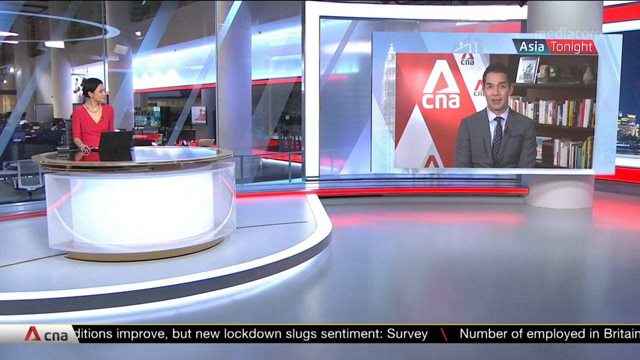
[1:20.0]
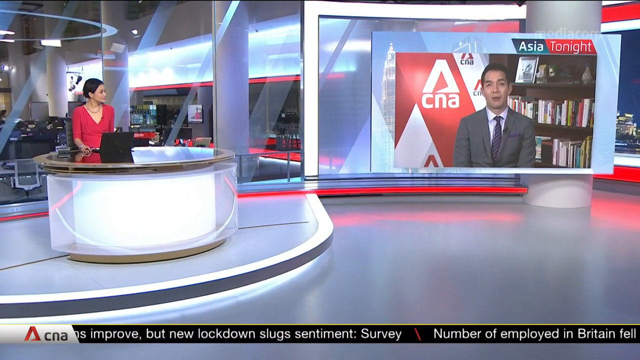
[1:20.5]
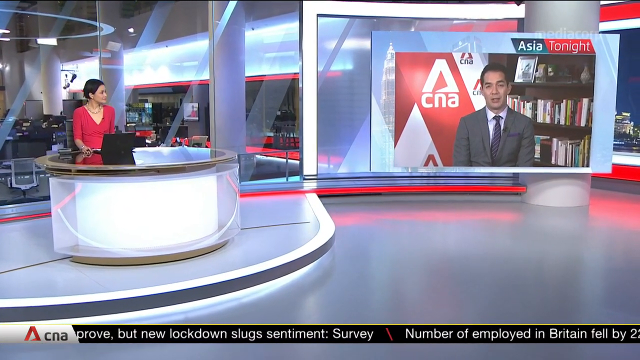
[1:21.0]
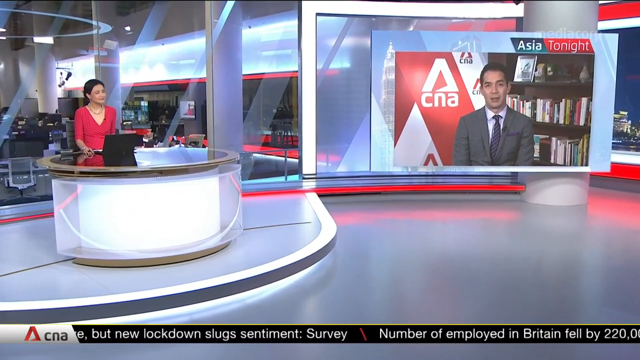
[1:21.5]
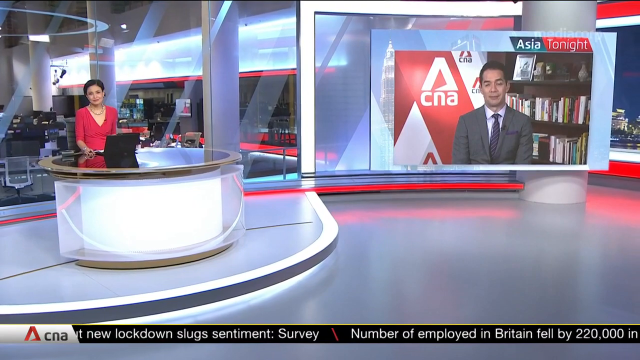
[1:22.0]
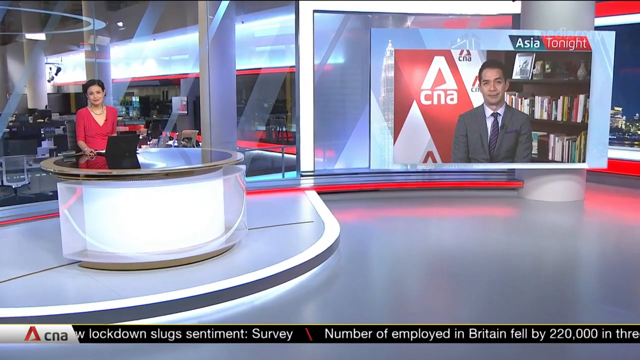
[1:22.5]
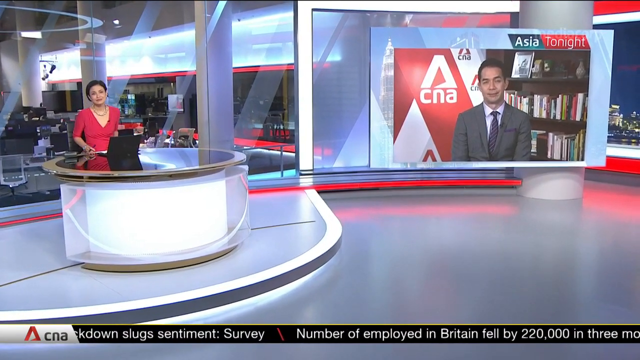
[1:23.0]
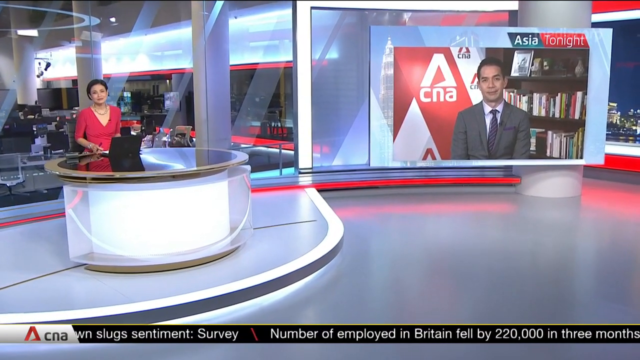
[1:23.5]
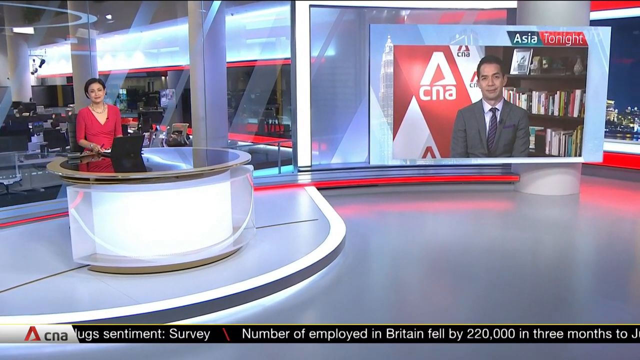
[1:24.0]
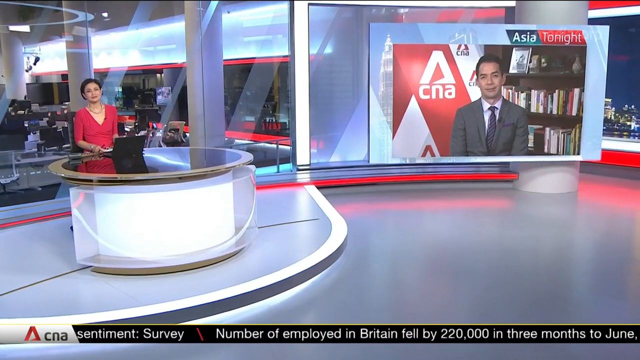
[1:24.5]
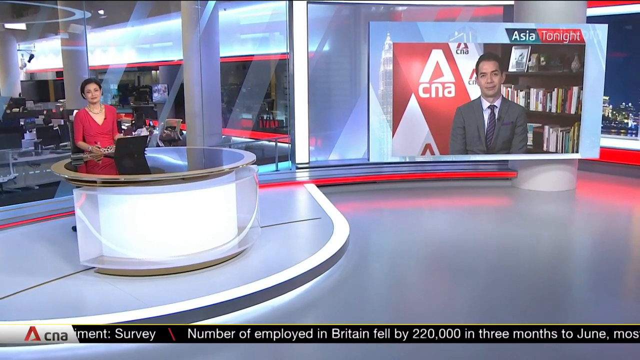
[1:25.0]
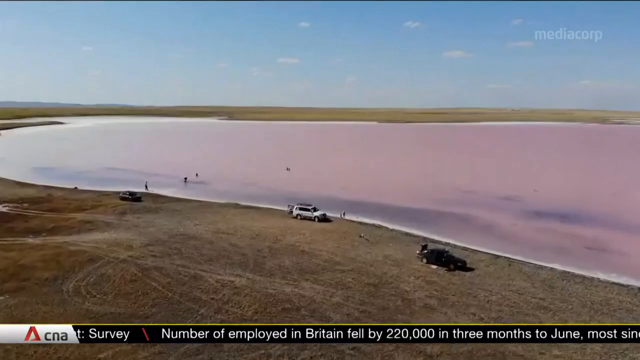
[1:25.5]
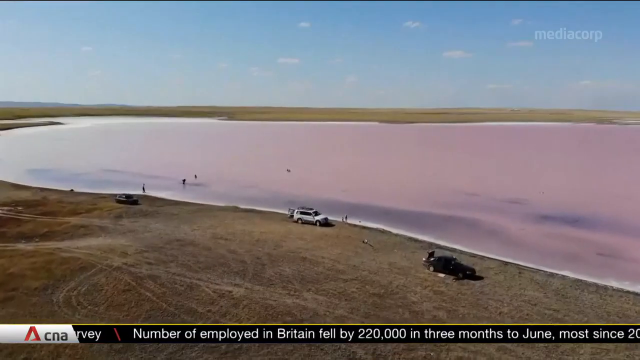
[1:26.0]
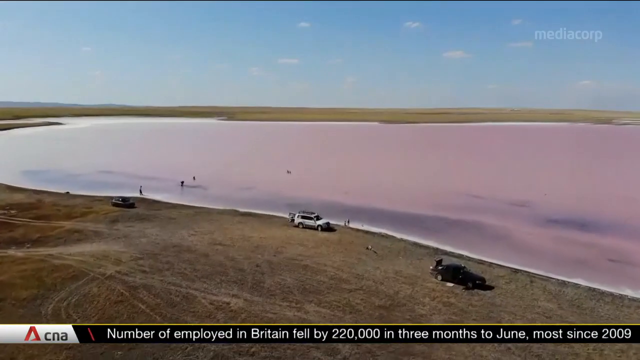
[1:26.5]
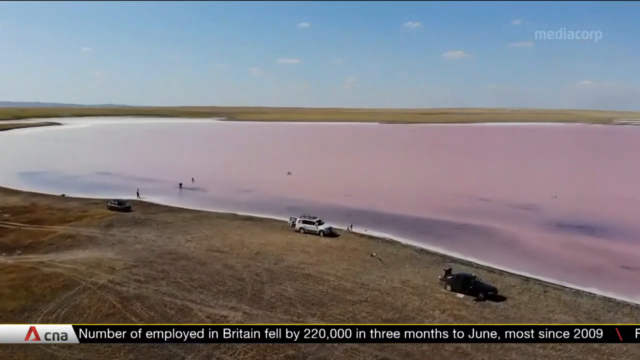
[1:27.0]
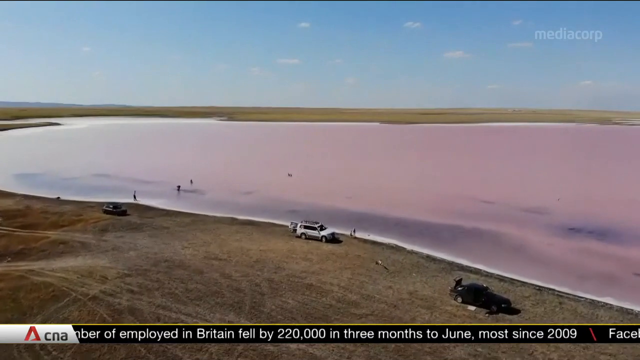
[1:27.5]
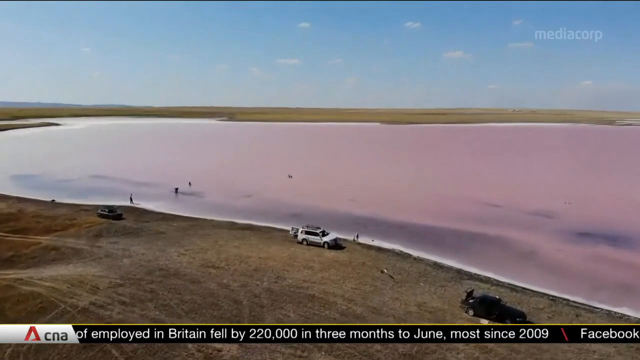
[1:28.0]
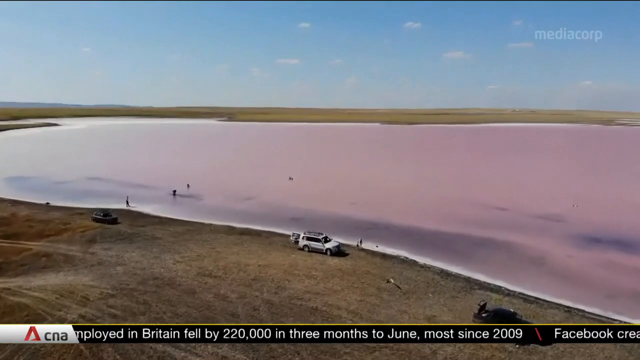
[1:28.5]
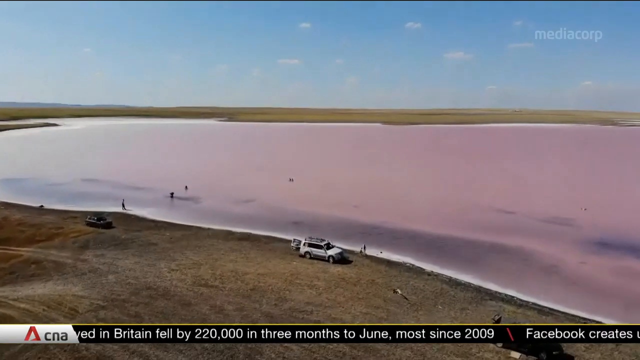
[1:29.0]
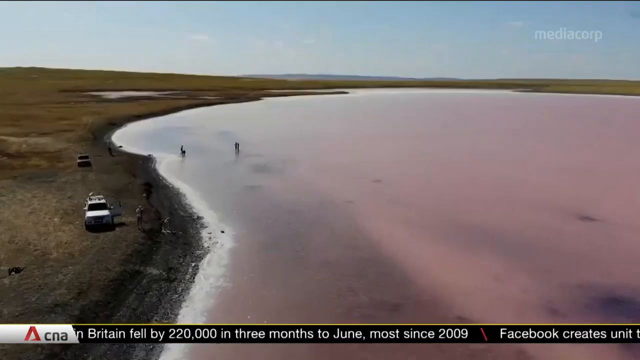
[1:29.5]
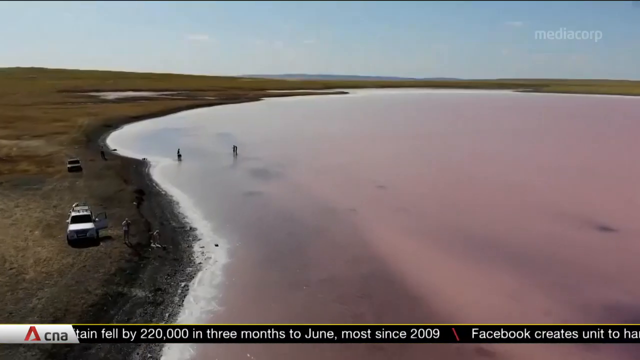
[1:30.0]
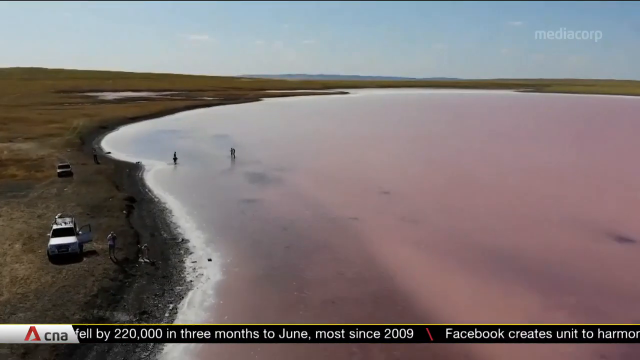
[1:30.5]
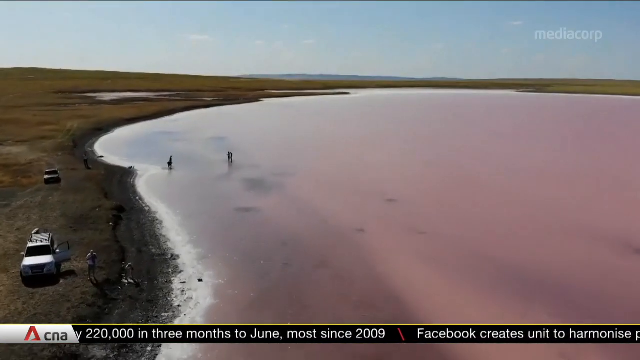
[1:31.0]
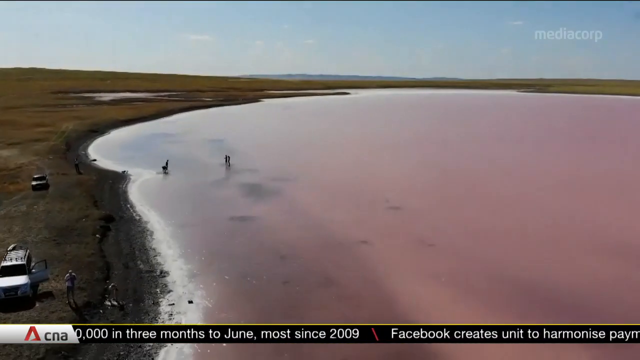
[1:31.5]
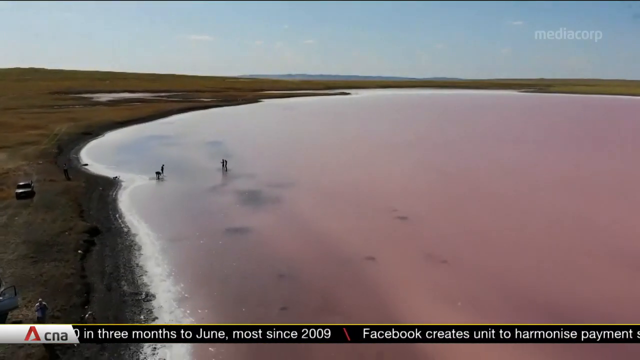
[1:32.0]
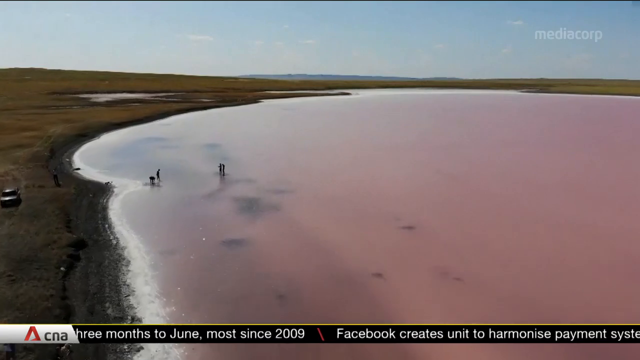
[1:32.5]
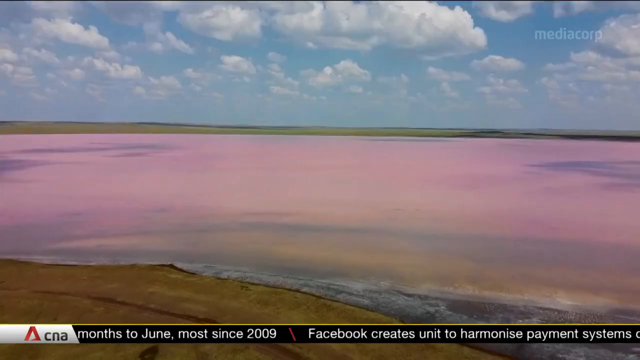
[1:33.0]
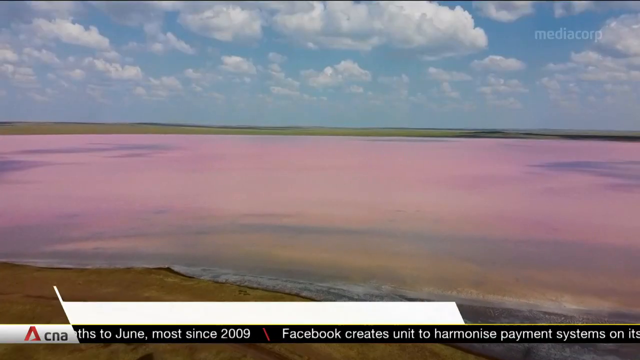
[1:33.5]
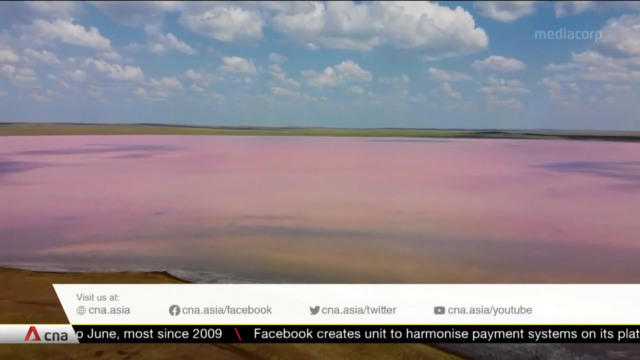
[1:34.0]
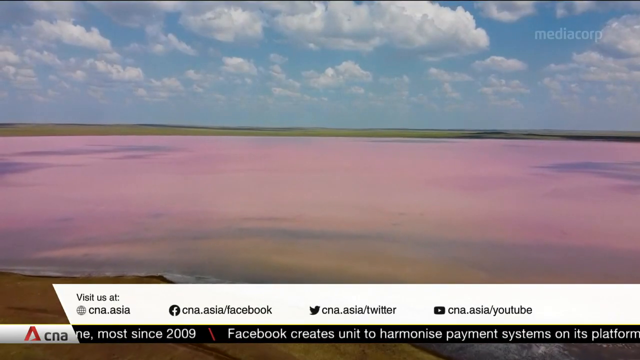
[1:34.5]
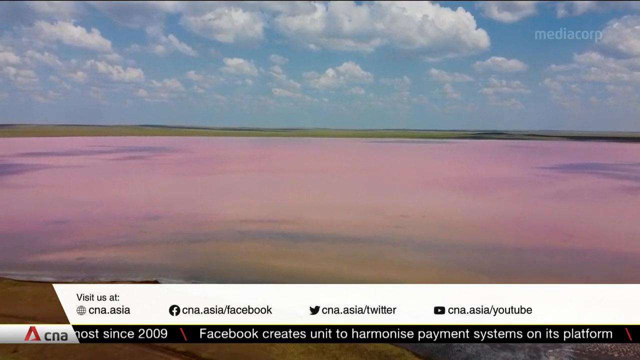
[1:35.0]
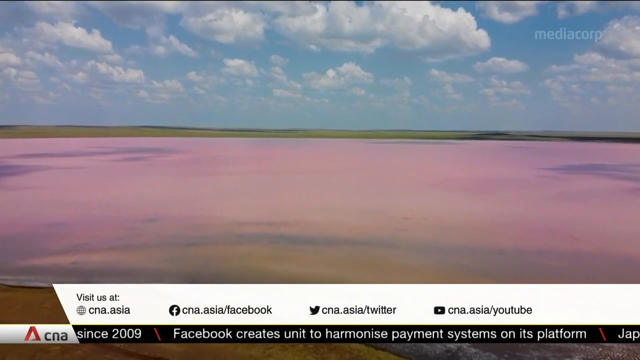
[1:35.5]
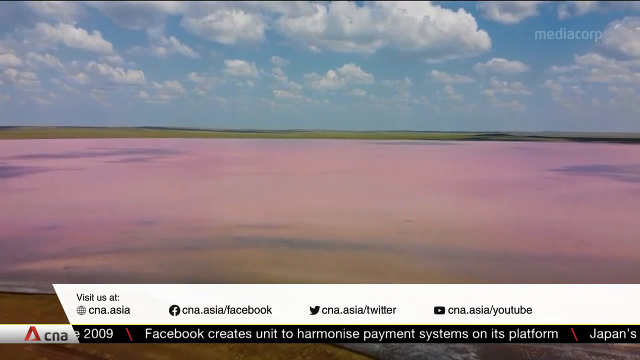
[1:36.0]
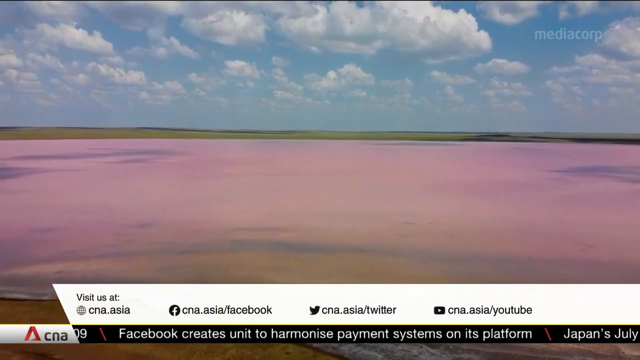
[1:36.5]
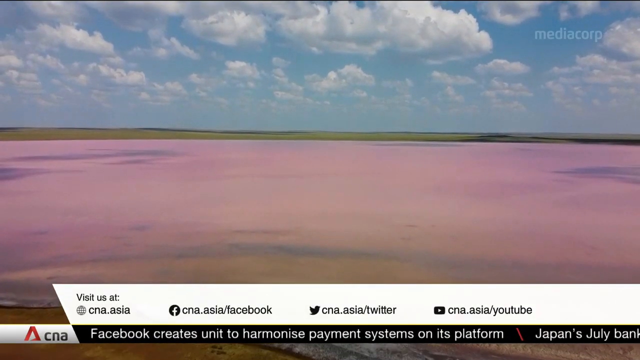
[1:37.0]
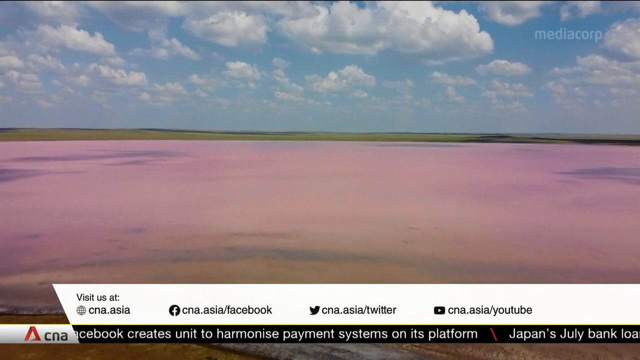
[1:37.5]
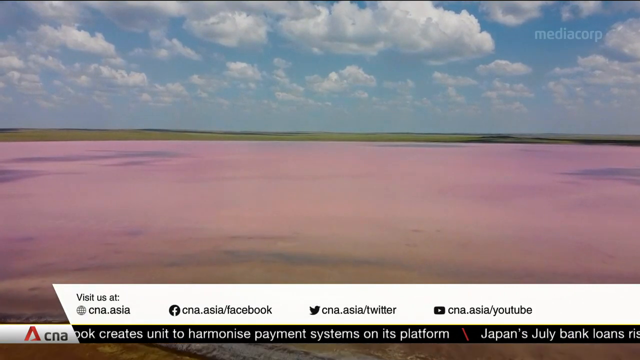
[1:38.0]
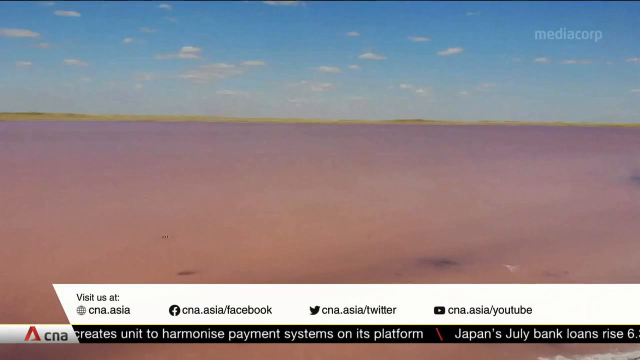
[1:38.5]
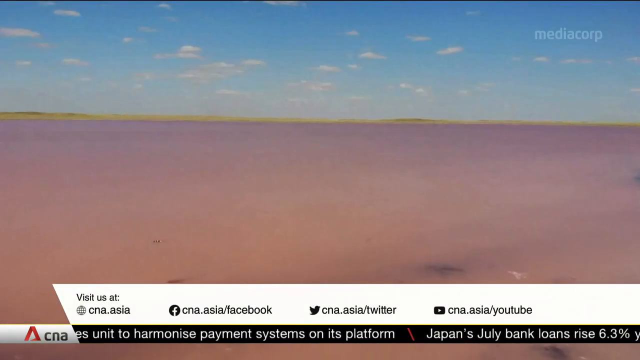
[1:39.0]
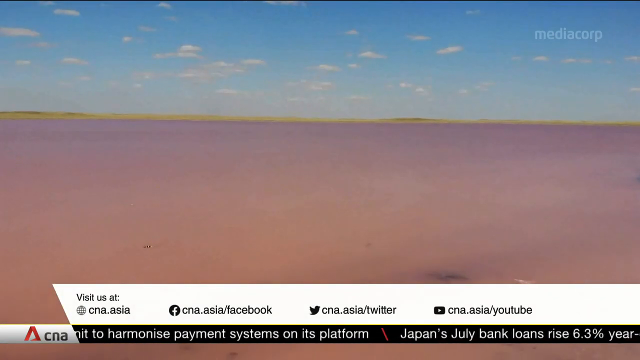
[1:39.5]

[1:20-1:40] The video returns to the anchor desk, where the anchor is sitting behind a round desk. On the far right side of the room is a very large video screen with a reporter on it, and on the far left side is another very large video screen with a reporter. The screen then transitions to a drone view of the pink lake showing visitors parked beside and inside the lake. A white banner pops up at the bottom of the screen reading "visit us at cna.asia", followed by the Facebook account "cna.asia/Facebook", the Twitter handle "cna.asia/Twitter" and the YouTube account "cna.asia/YouTube". It then gives hair information, showing that Jeric Salon styled the anchor's hair.